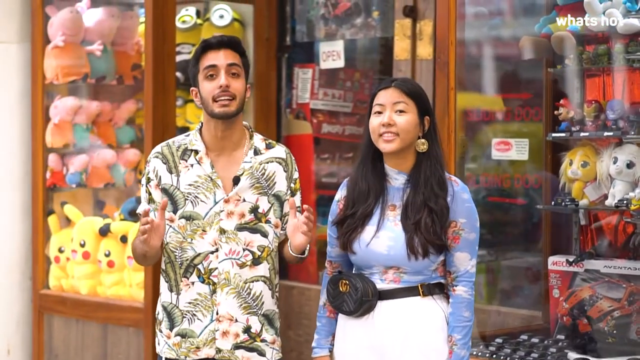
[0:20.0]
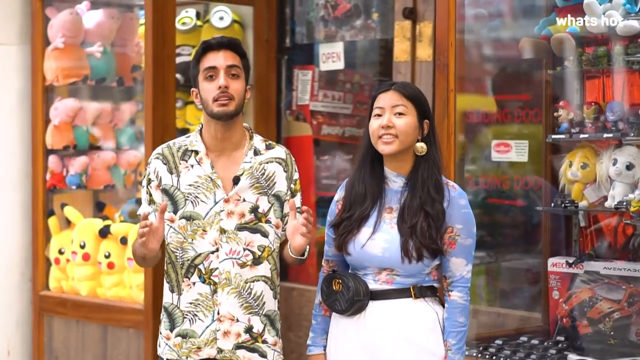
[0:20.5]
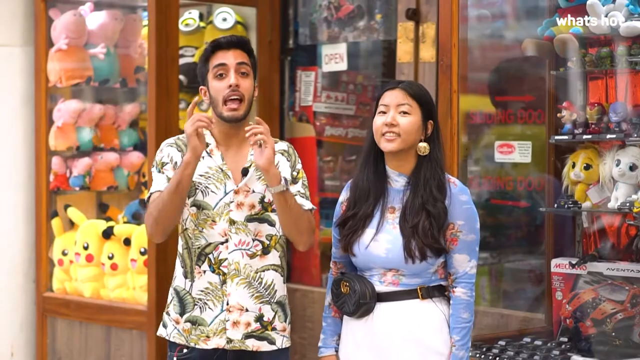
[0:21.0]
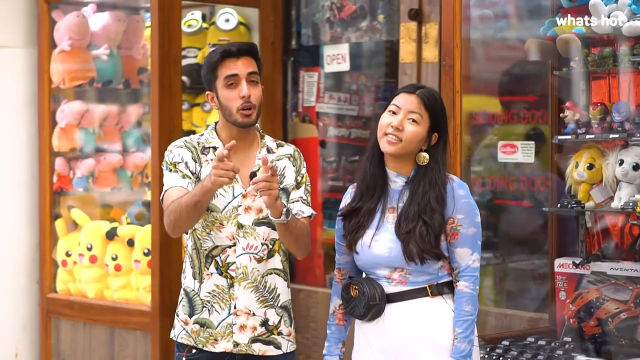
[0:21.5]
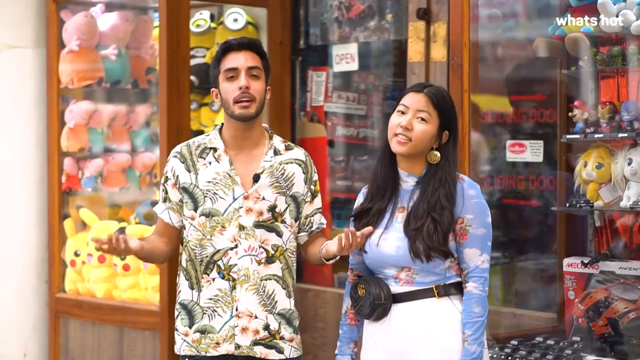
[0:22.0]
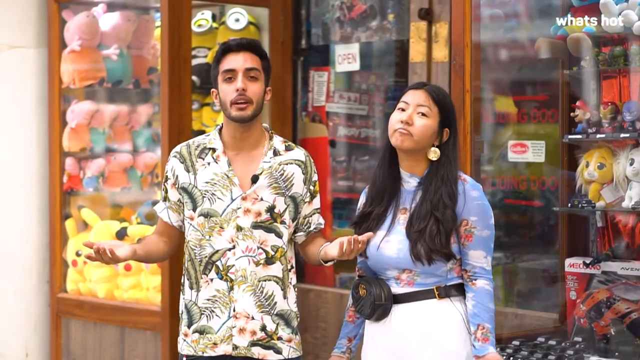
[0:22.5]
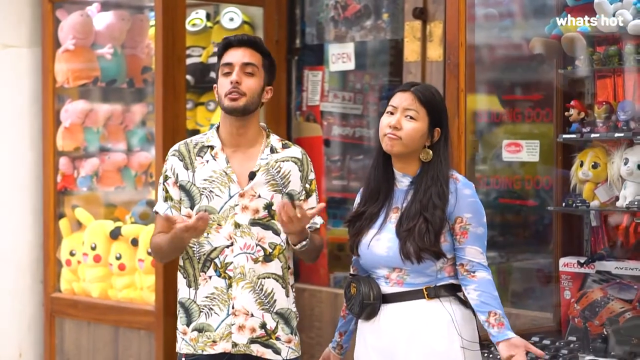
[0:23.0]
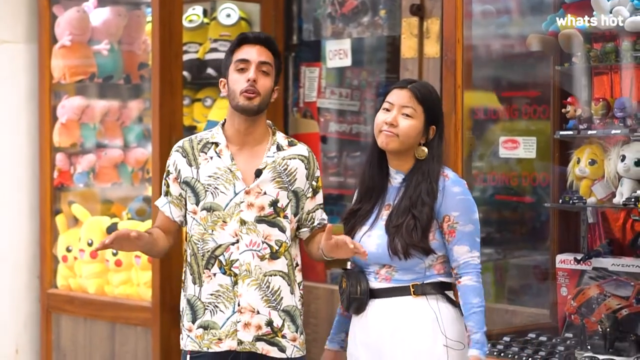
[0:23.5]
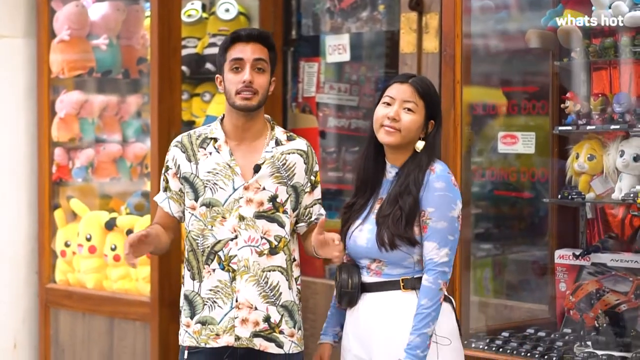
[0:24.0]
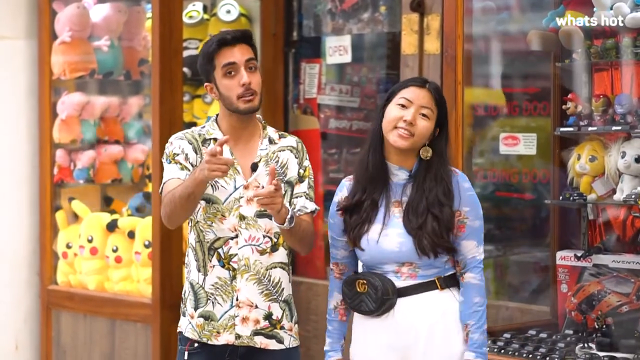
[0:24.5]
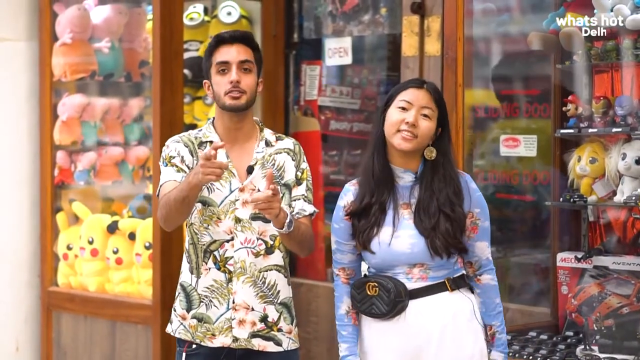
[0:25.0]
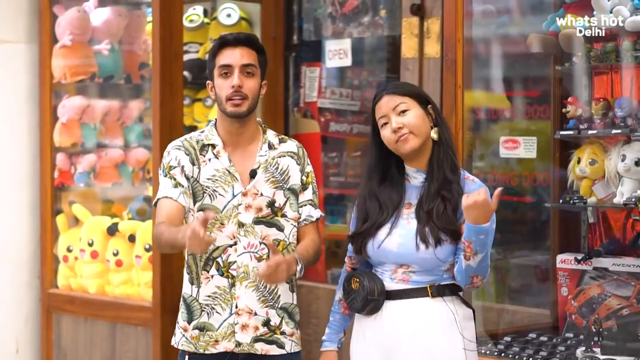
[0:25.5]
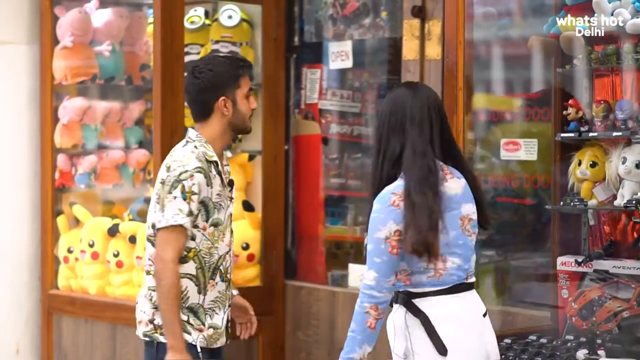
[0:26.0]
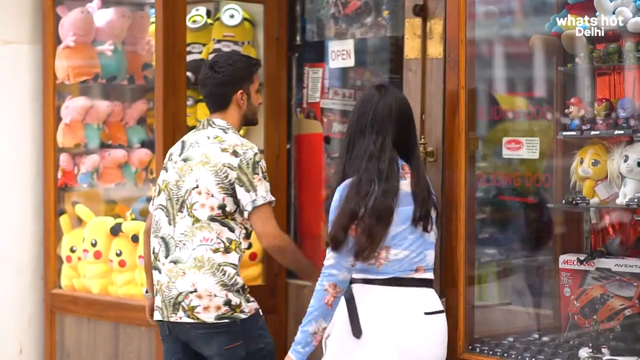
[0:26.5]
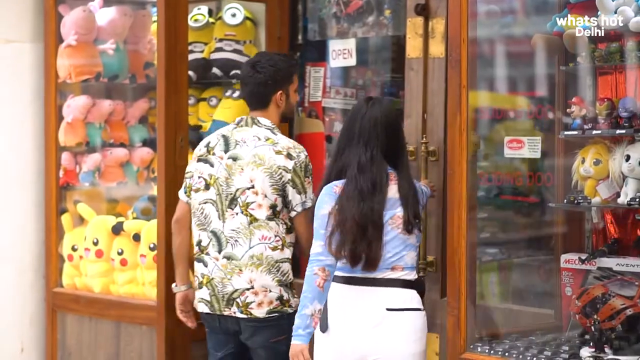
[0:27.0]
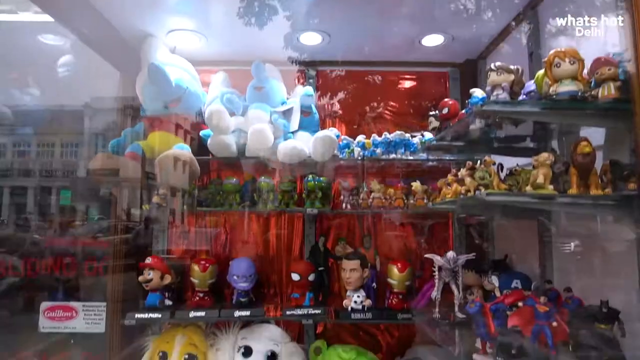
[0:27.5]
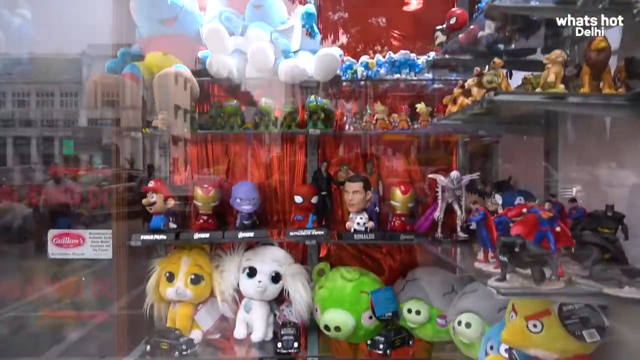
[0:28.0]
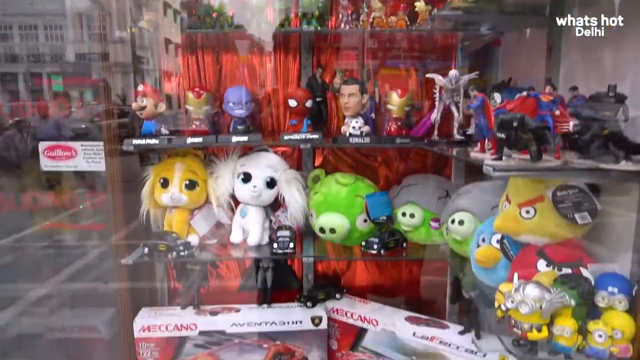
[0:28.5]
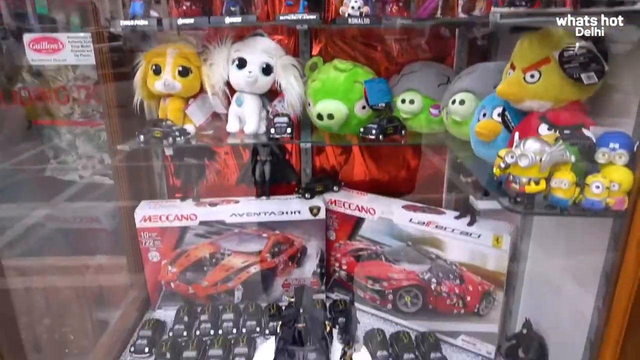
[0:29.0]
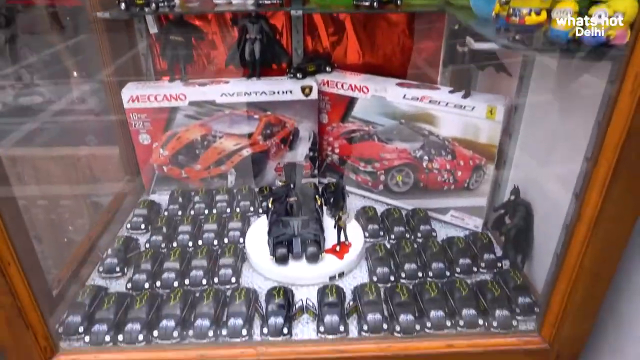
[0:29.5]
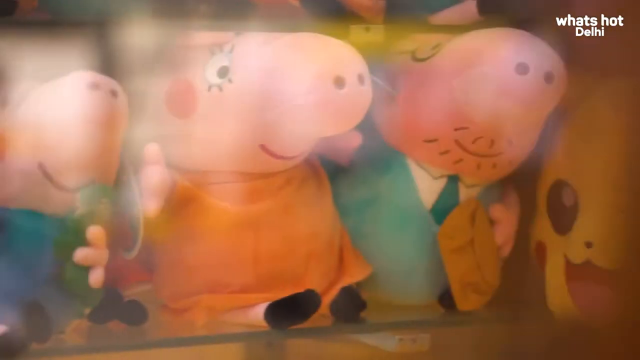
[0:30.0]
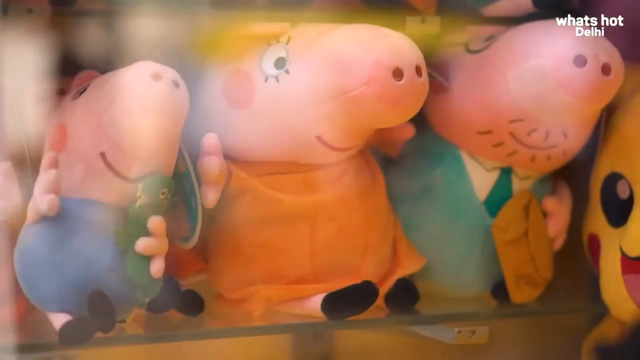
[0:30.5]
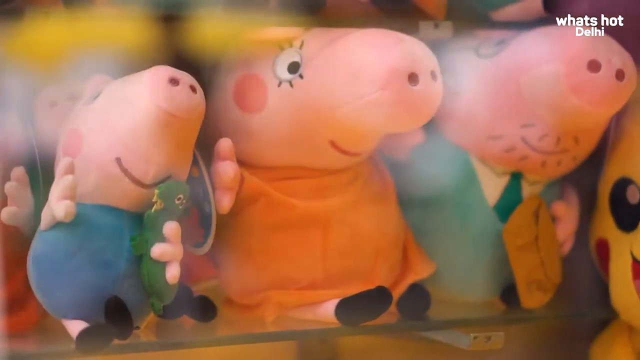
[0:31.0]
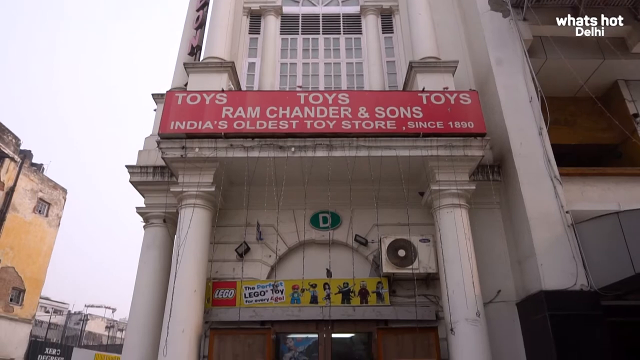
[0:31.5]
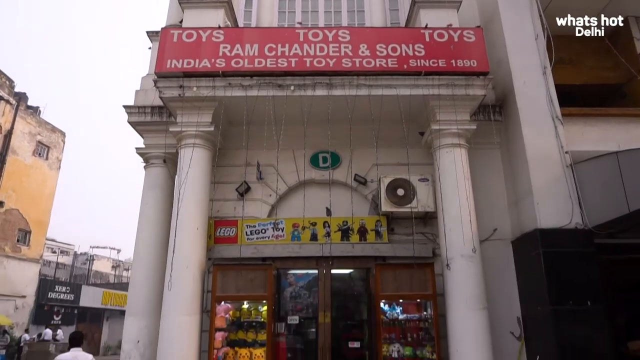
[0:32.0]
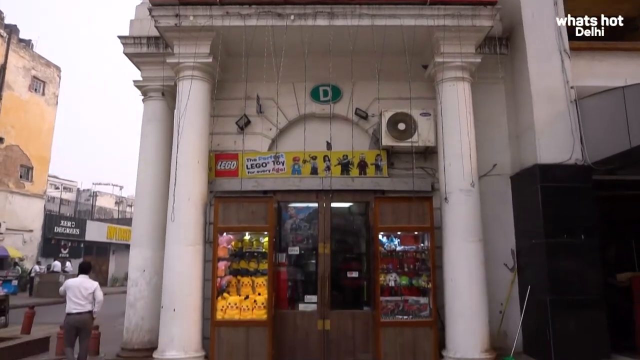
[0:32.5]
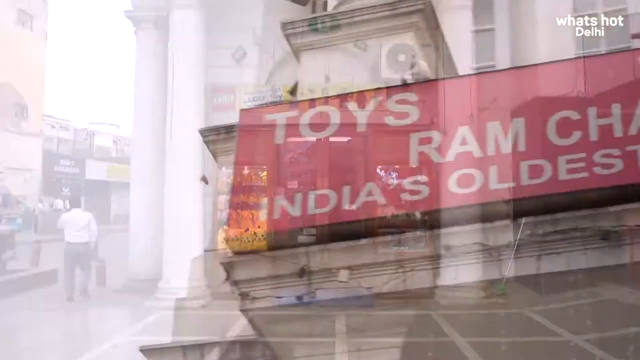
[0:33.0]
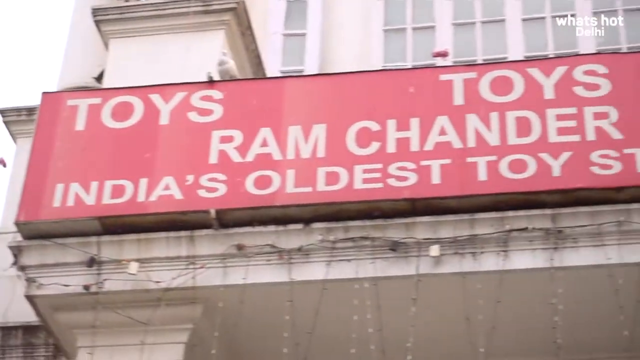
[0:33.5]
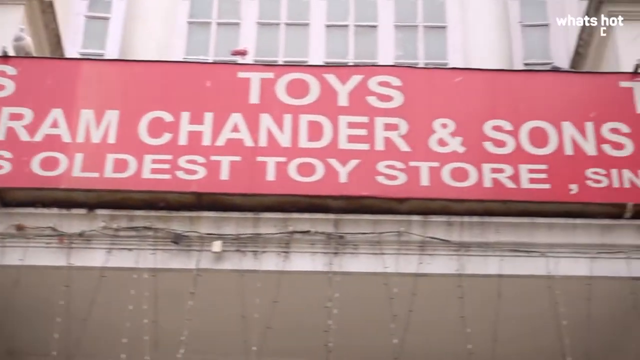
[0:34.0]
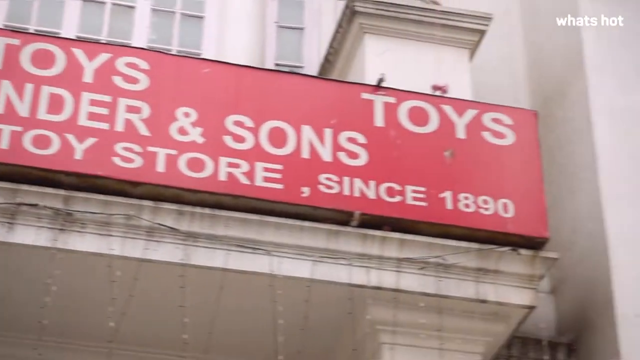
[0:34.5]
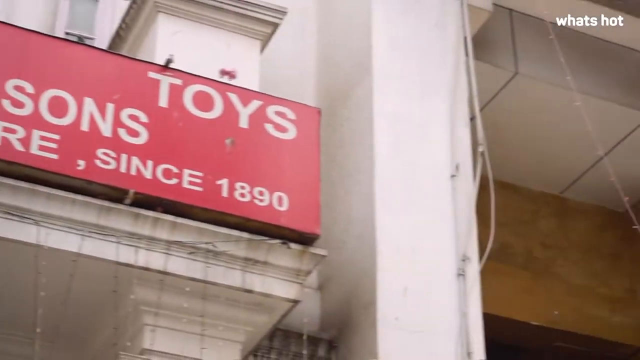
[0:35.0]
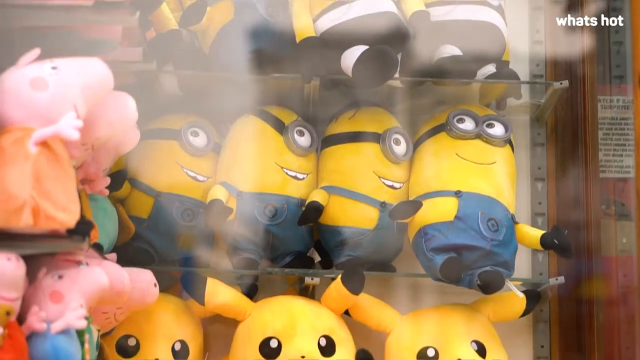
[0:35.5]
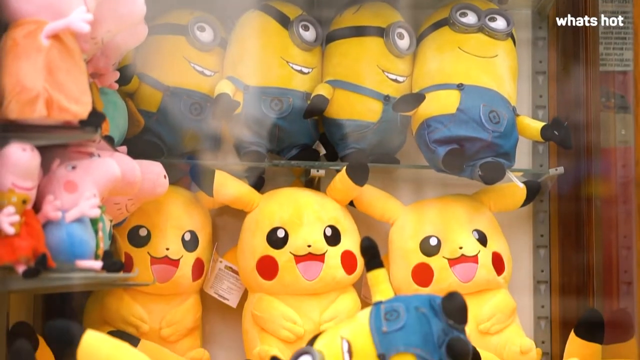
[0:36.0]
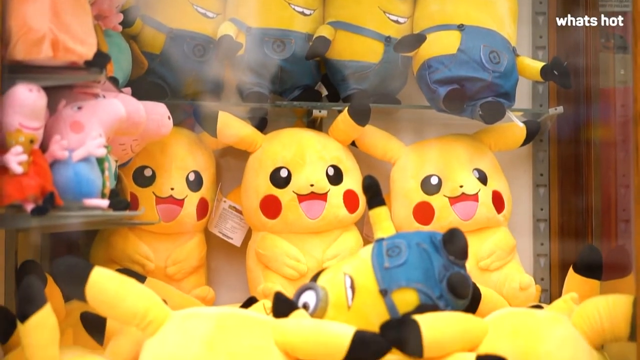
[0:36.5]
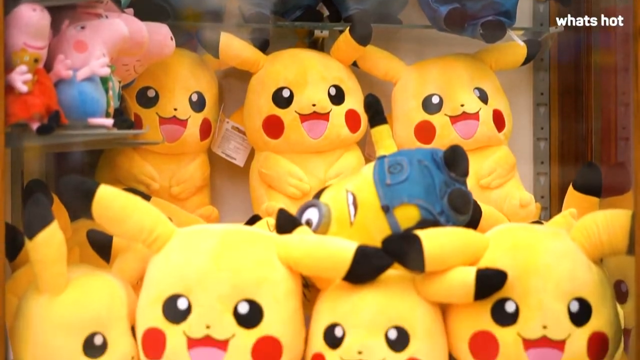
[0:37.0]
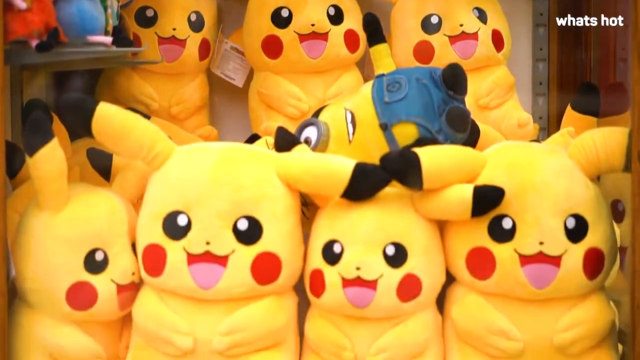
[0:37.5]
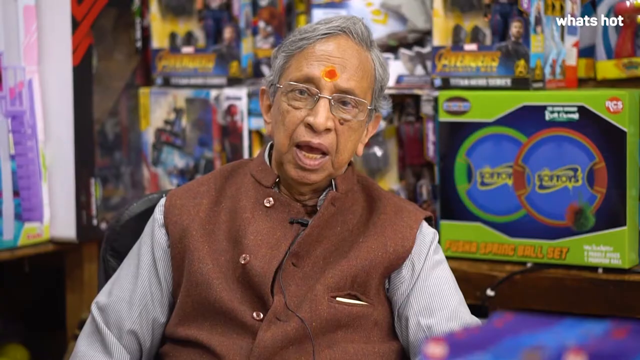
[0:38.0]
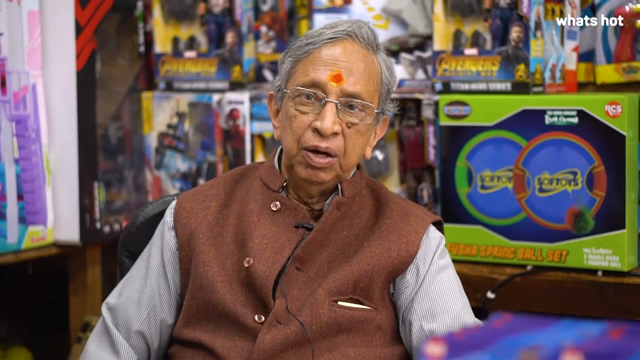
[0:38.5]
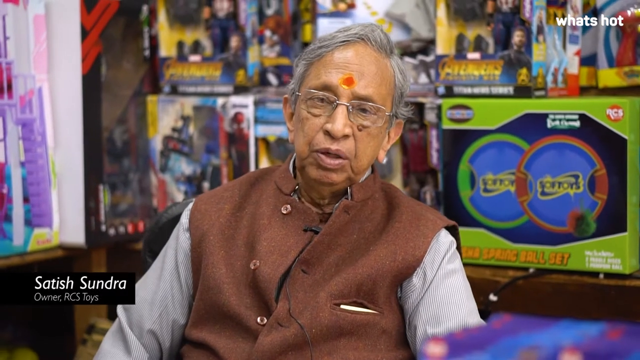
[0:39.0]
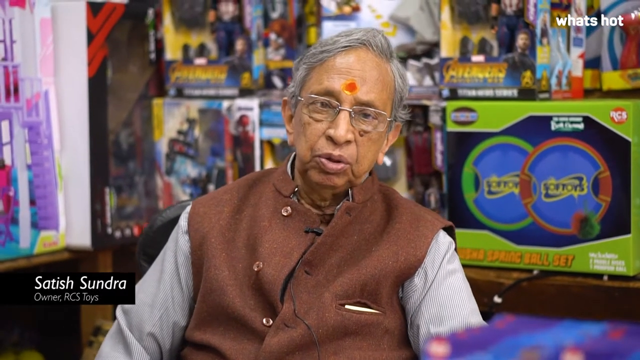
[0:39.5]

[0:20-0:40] A man and a woman appear; the people seem to be of some sort of Chinese and Arabic descent. He has low-cut black hair, without much hair, and a low-cut beard, while her hair is long. She wears a blue shirt, and he wears a tan, floral, buttoned-up shirt. Both seem very confident. They walk into the toy store and showcase a bunch of different toys. Text says "toy Ram Chander".